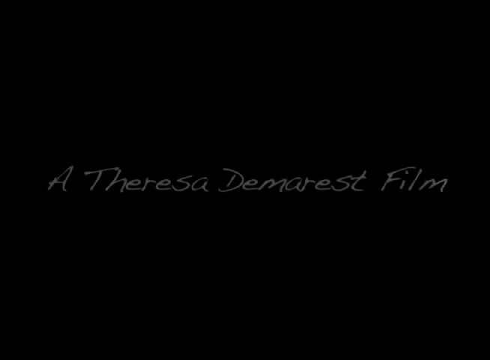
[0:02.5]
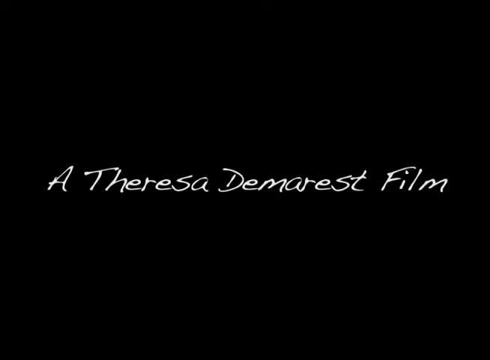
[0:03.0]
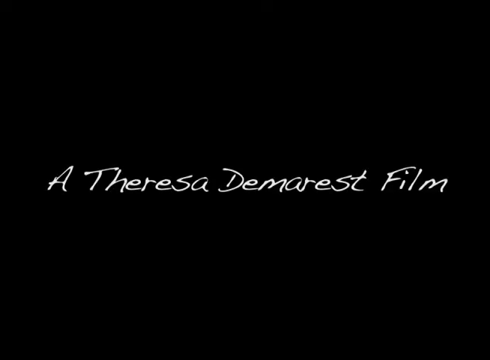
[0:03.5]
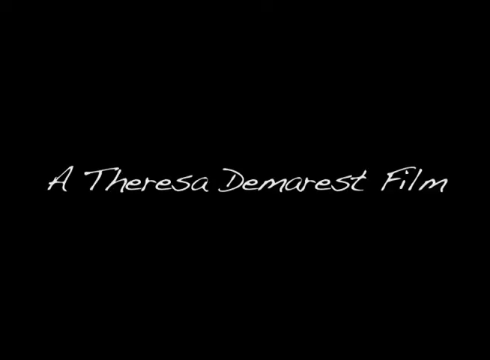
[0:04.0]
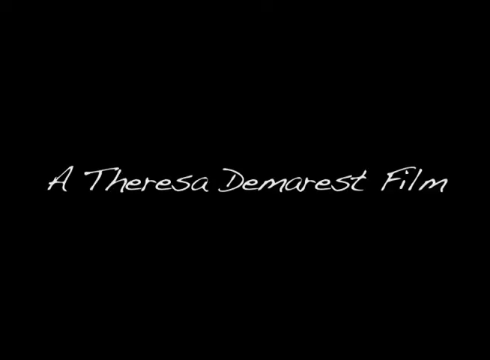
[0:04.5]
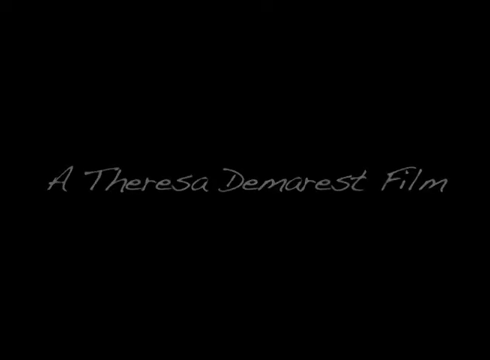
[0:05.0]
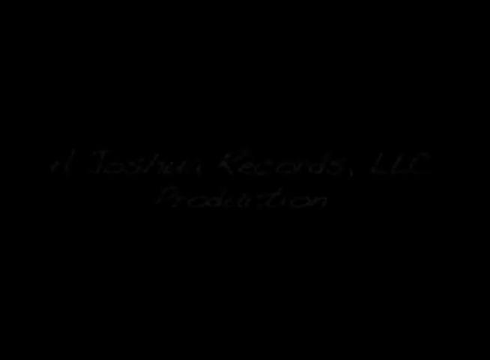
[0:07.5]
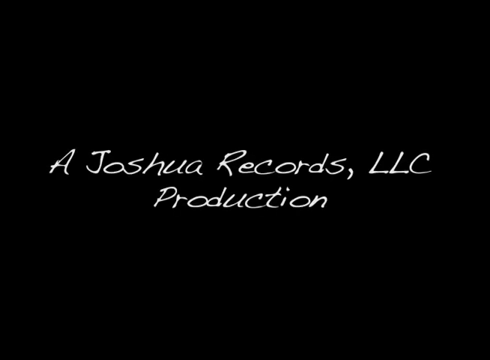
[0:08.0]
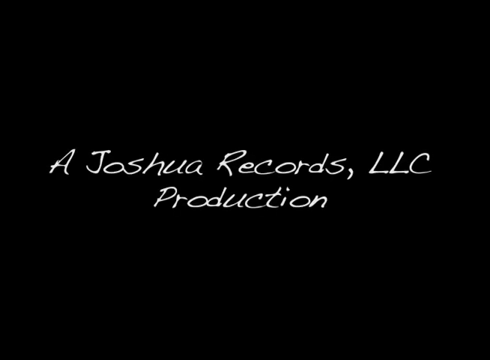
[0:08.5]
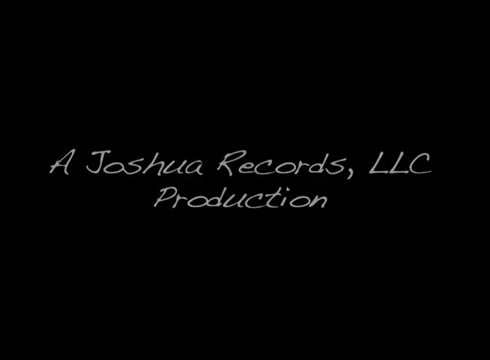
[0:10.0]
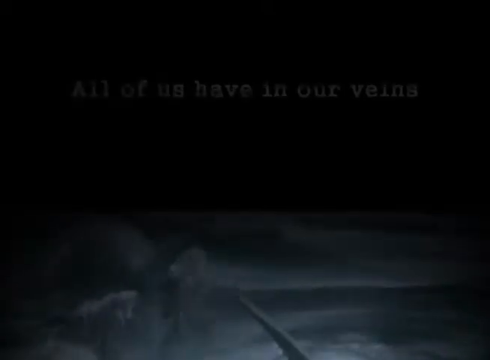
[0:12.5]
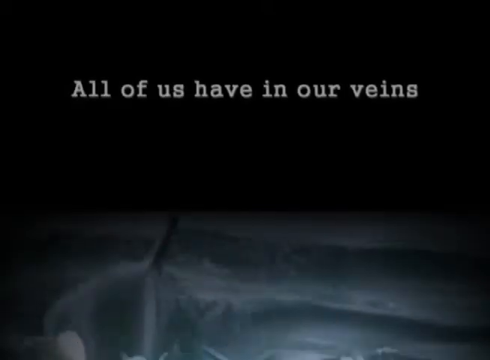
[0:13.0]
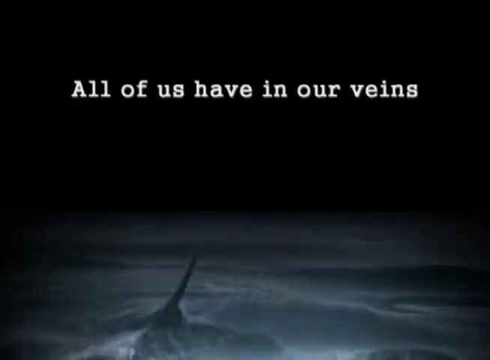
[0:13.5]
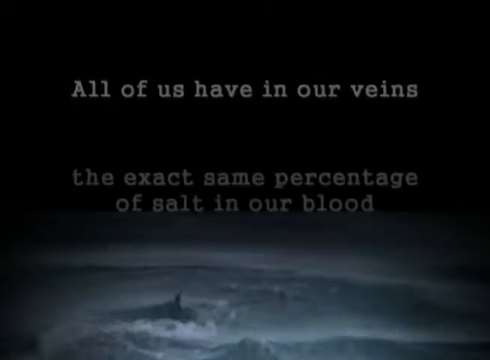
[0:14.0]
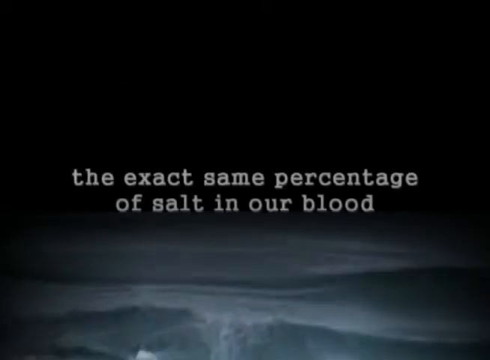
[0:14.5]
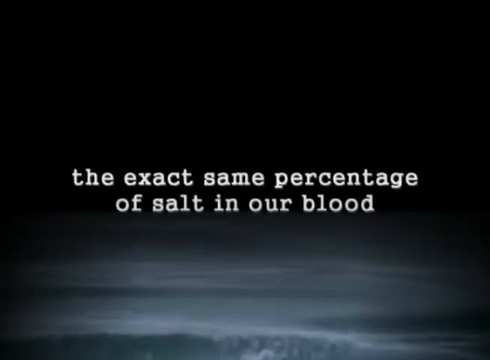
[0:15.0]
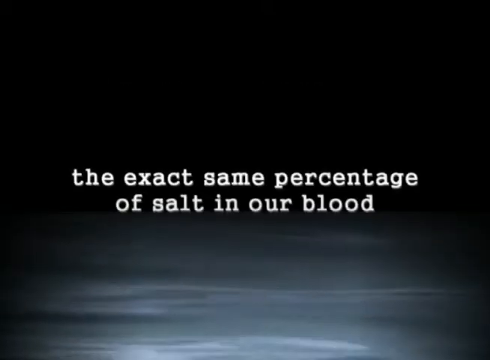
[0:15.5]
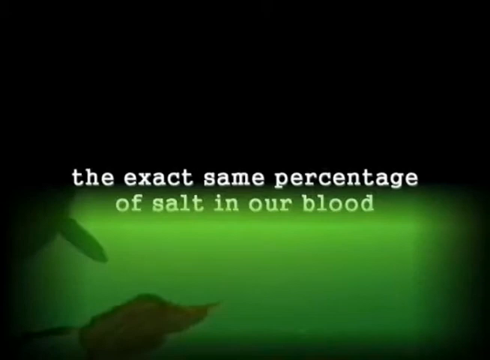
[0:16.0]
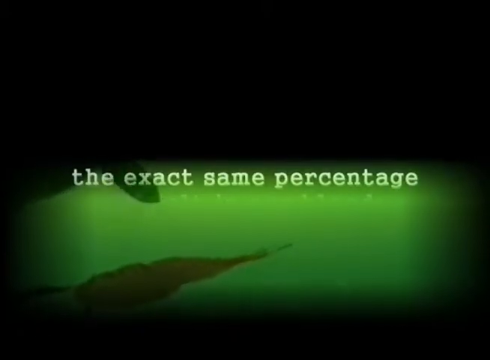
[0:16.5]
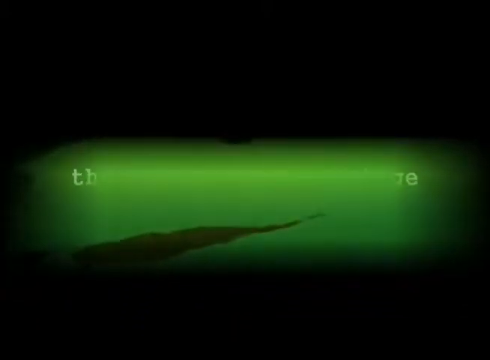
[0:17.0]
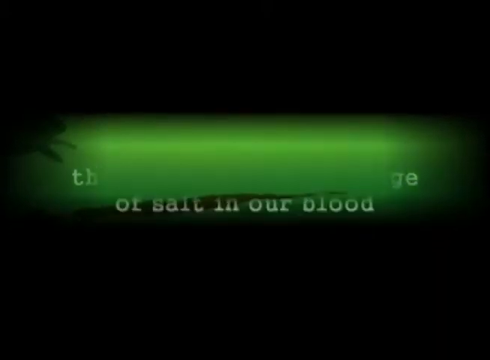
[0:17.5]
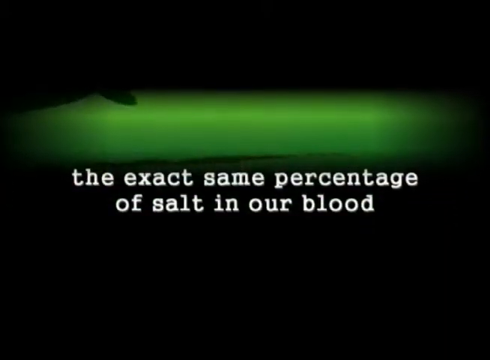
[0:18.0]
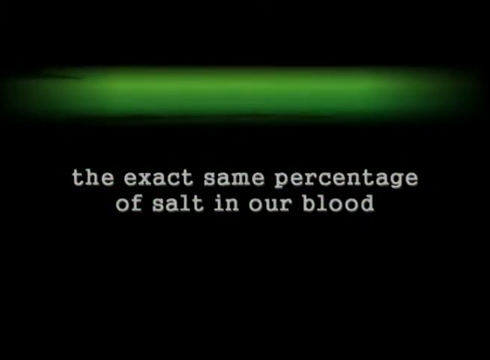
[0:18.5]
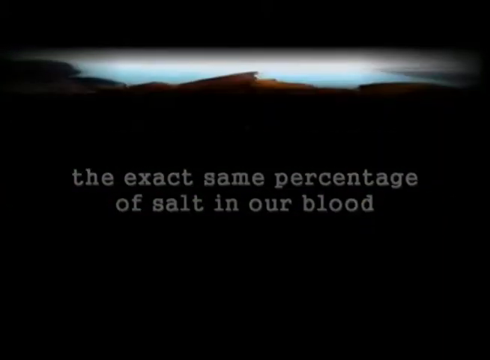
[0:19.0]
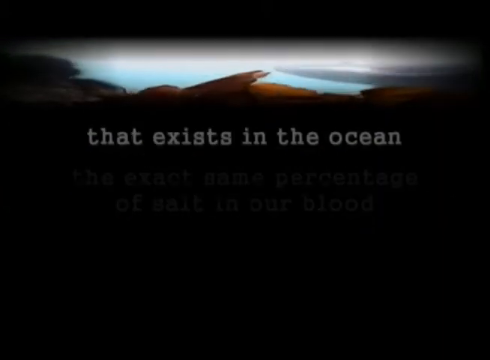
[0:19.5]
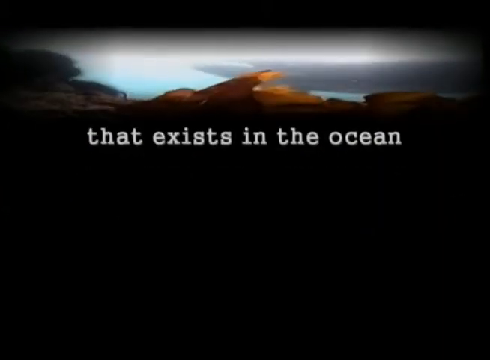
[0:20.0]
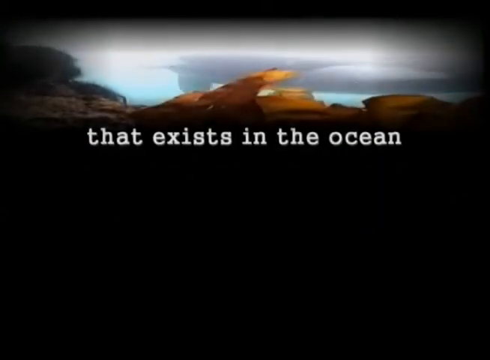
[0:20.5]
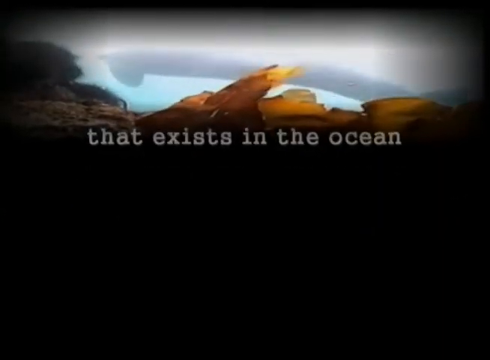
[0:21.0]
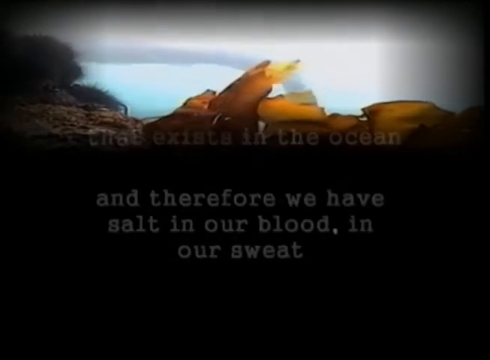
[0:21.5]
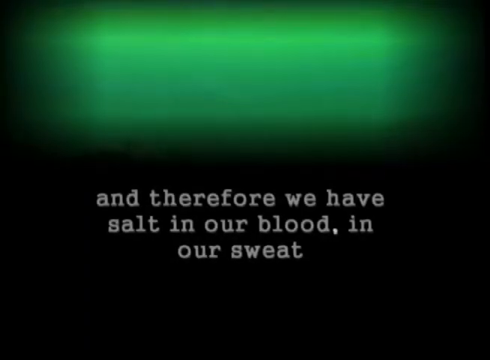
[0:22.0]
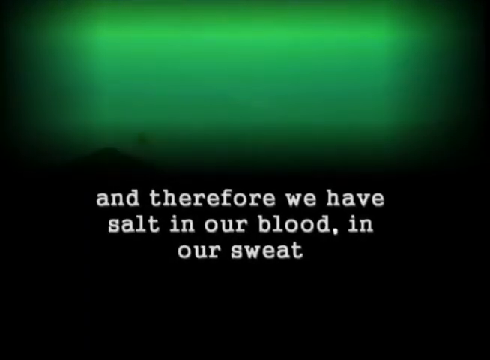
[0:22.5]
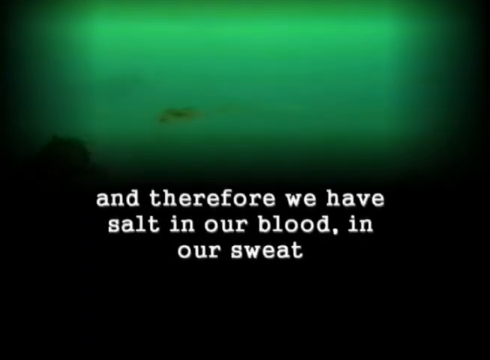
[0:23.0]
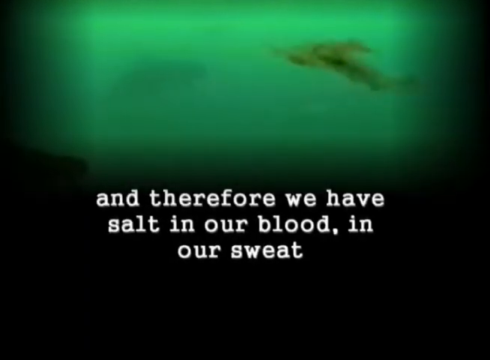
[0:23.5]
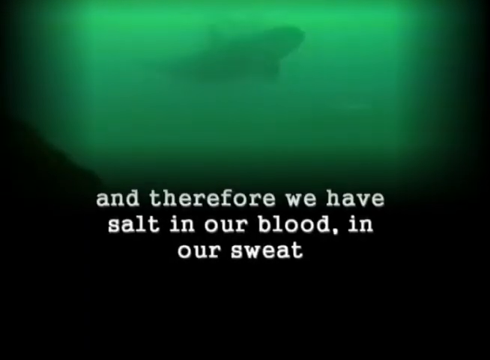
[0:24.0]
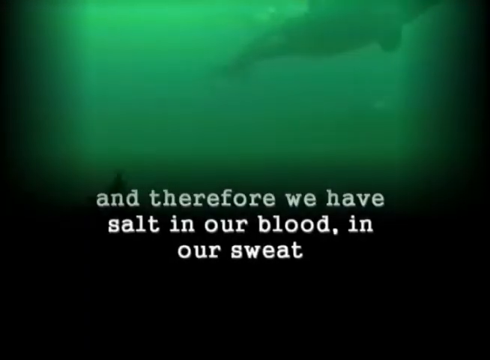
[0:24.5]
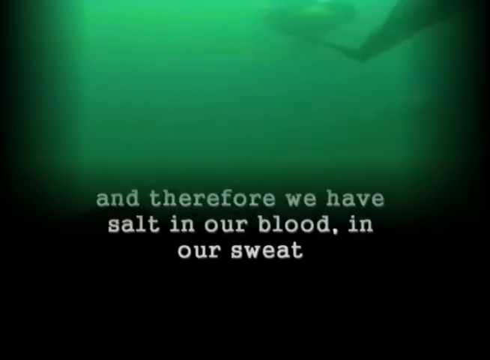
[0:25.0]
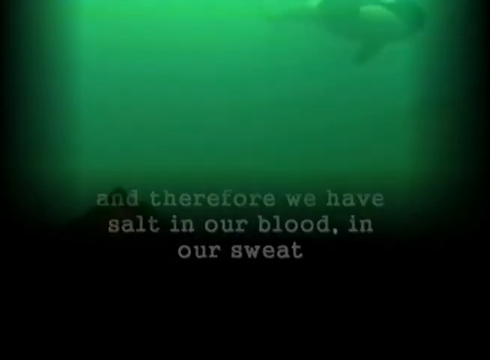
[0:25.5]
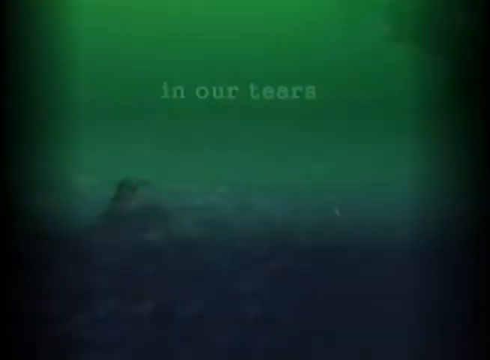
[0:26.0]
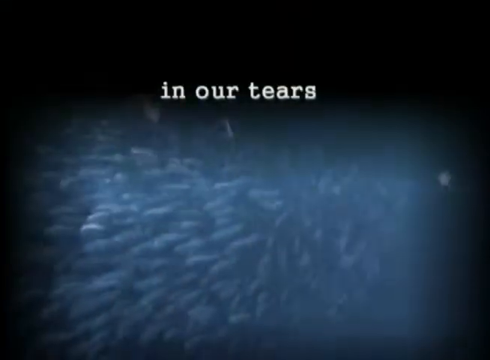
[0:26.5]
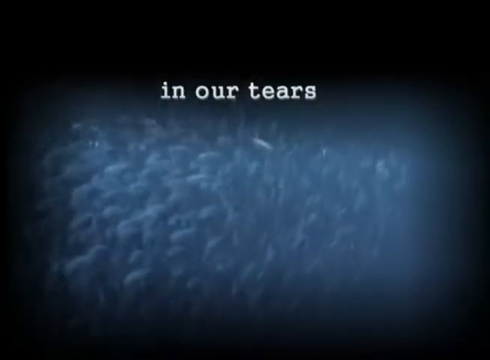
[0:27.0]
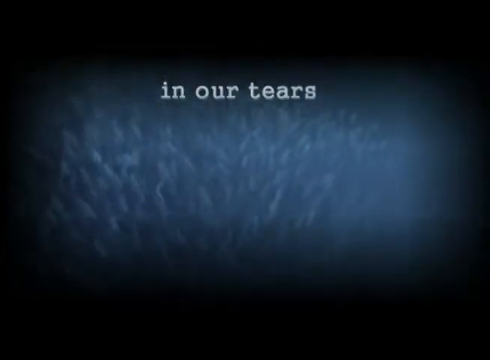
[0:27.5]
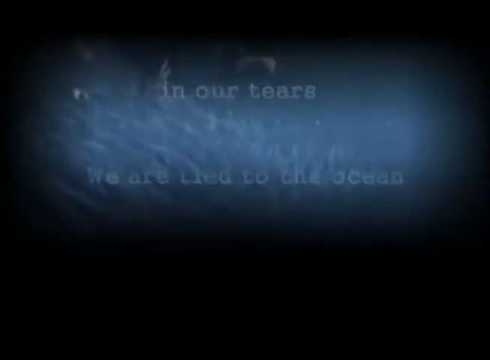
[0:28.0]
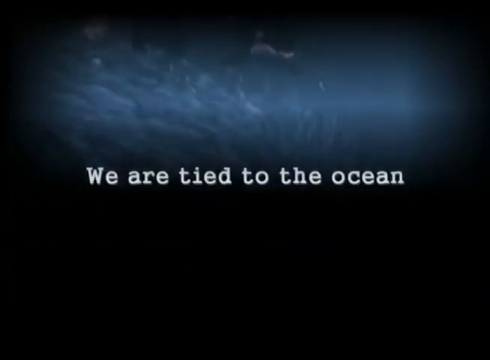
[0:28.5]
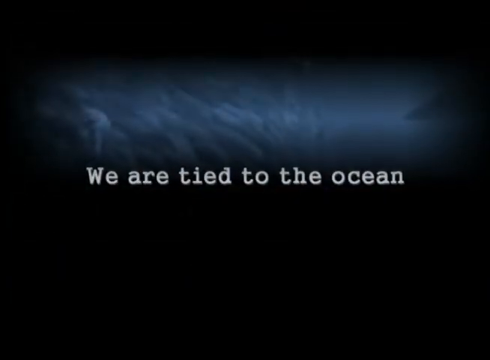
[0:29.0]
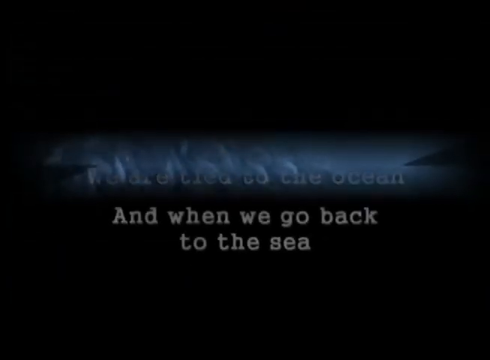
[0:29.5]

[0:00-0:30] The video opens on a black screen. In the middle, white text in cursive writing appears: "a Teresa Damaris film." The shot turns to an all-black background, on which white text reads "A Joshua Records, LLC production." On another black screen, white letters at the top read "All of us have in our veins," and at the bottom there is what looks like an orca in the water. Text appears in the middle of the screen, above the water: "The Exact Same Percentage of Salt in Our Blood." The water shimmers. The shot changes to a green background with objects floating in the water, and white text says "the exact same percentage." The green background scrolls up to the top of the screen and switches to an underwater shot of an orca swimming by, with white text in the middle reading "that exists in the ocean." Next, a green underwater image is at the top, showing killer whales swimming by, and below it white text reads "and therefore we have salt in our blood, in our sweat." The image then moves to the bottom and shows a school of small fish, with text above it saying "in our tears." The image of the small fish moves to the top of the screen and shrinks as killer whales enter the image. White text in the middle of the screen reads "We are tied to the ocean," followed by white text saying "and when we go back to the sea."